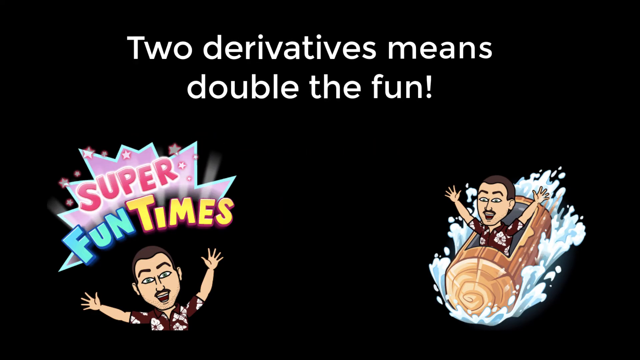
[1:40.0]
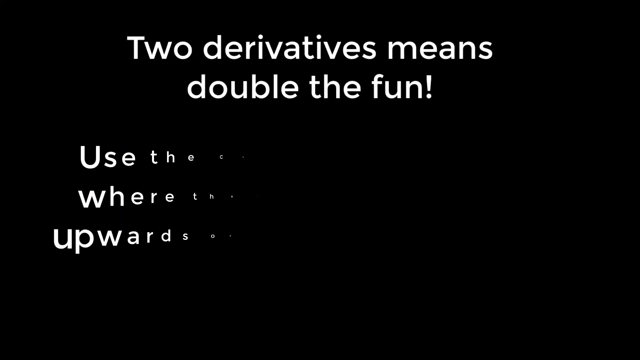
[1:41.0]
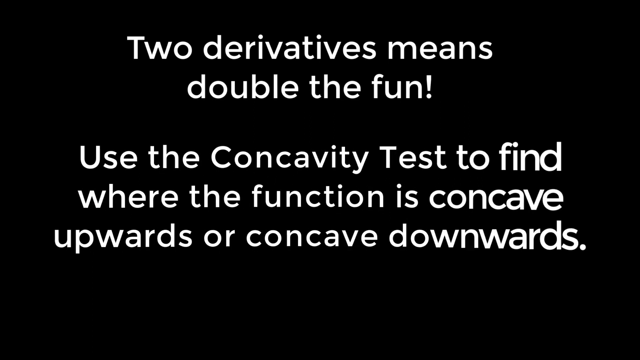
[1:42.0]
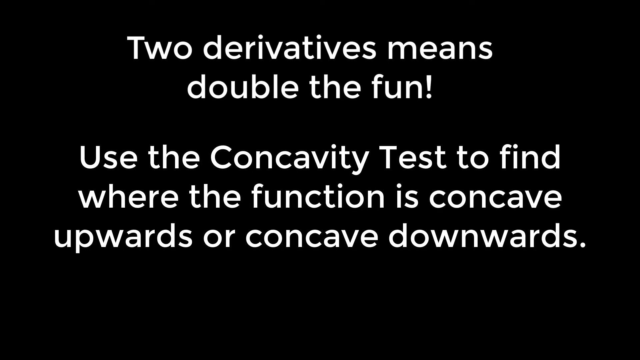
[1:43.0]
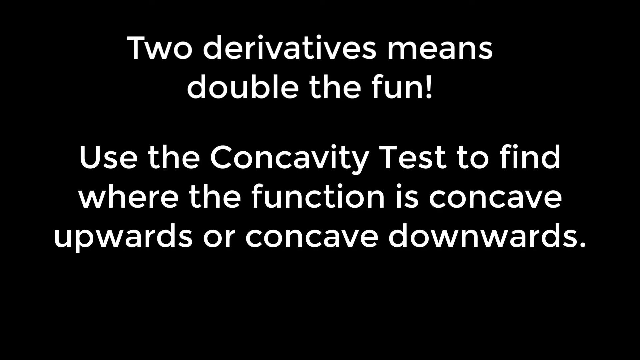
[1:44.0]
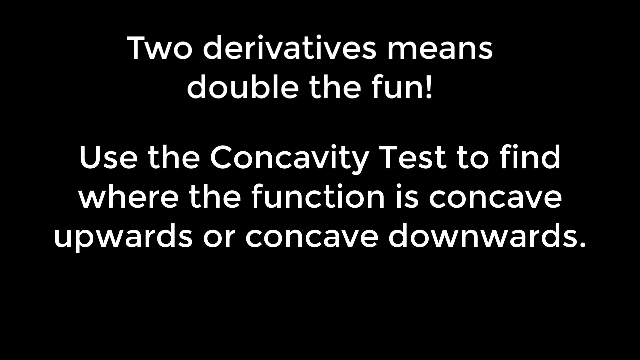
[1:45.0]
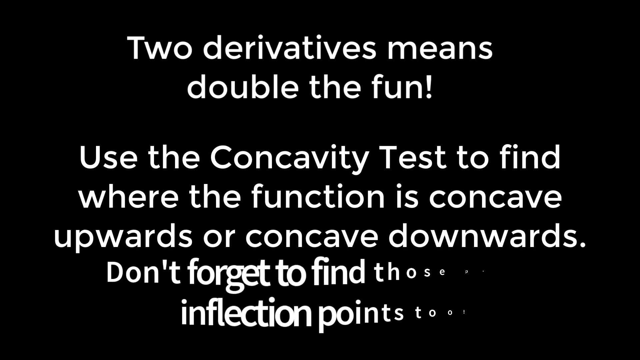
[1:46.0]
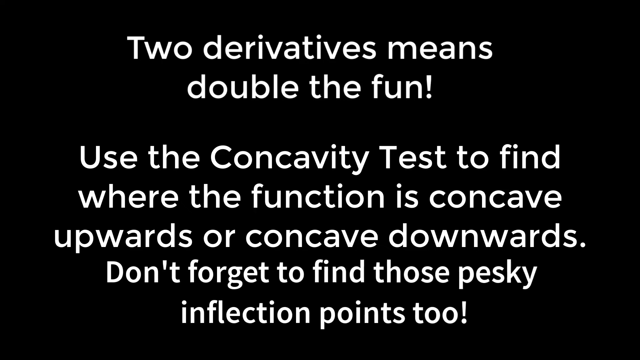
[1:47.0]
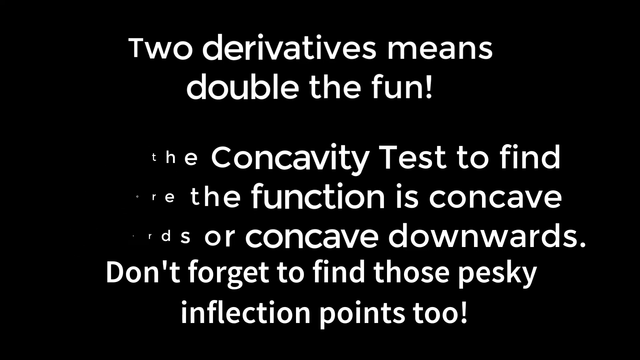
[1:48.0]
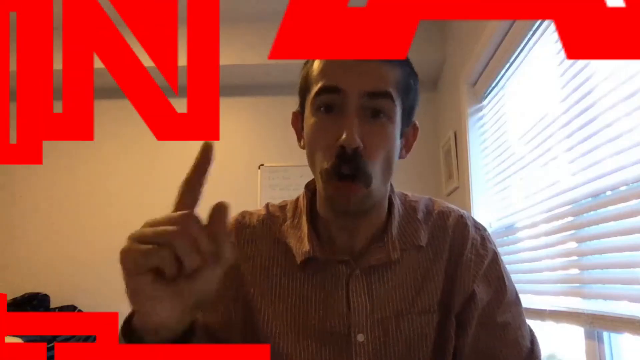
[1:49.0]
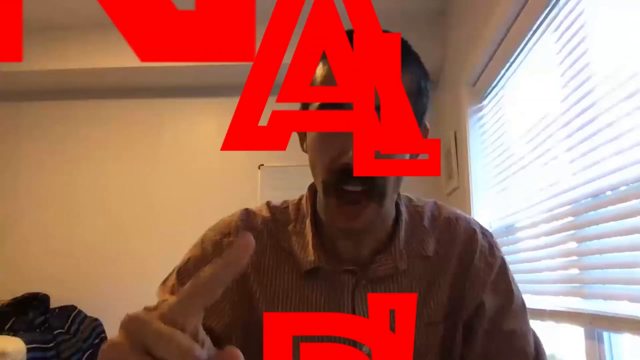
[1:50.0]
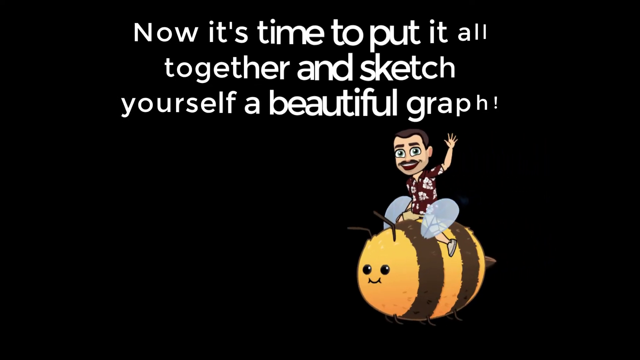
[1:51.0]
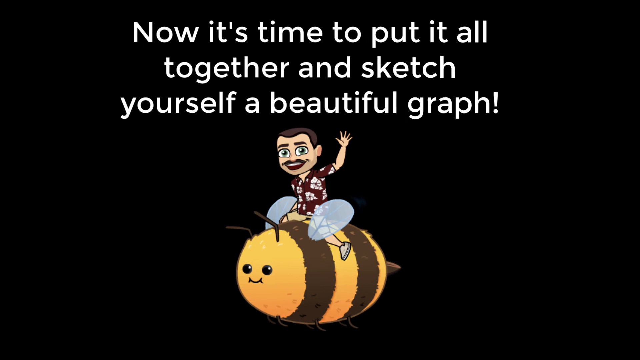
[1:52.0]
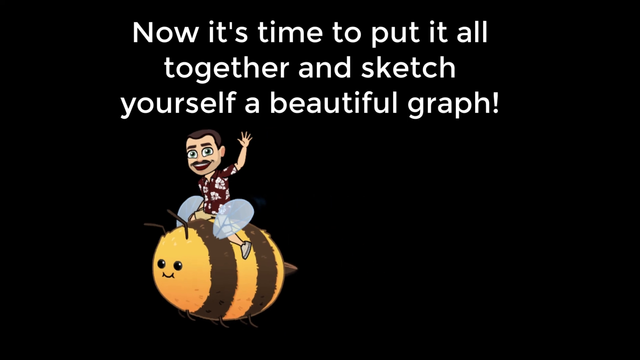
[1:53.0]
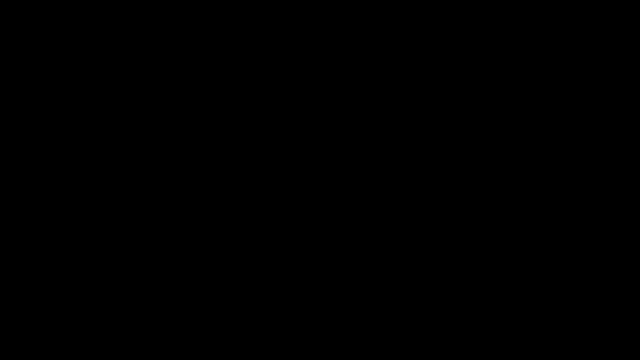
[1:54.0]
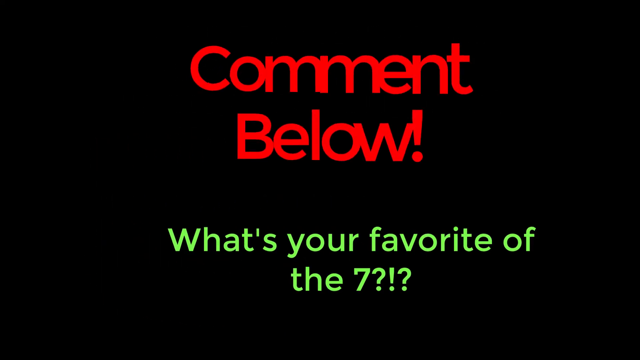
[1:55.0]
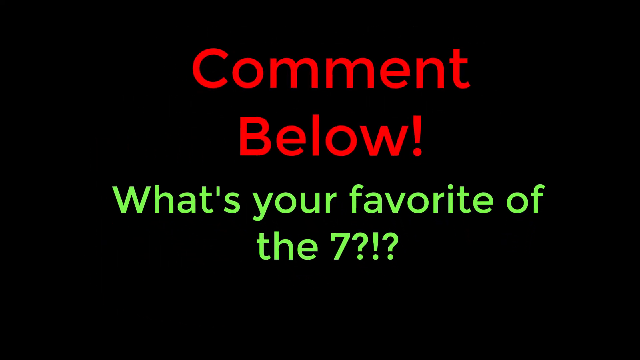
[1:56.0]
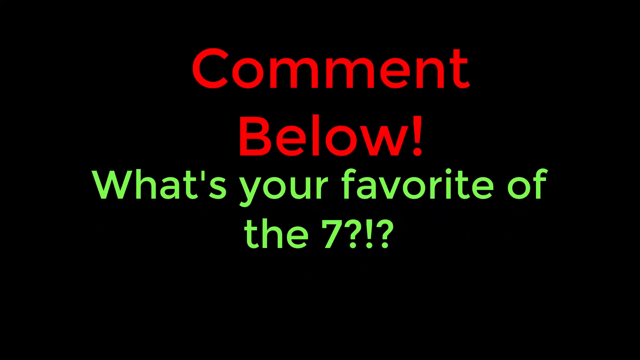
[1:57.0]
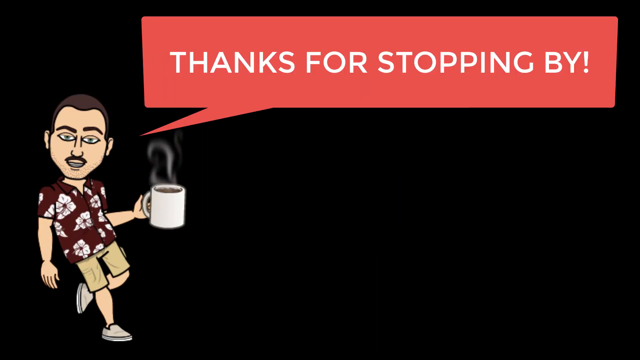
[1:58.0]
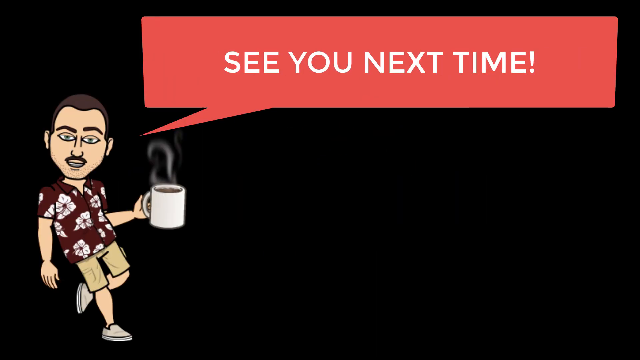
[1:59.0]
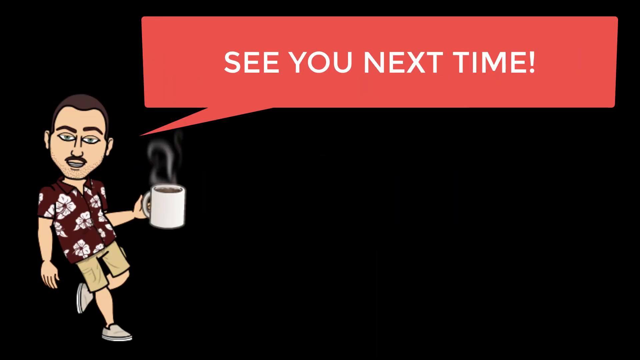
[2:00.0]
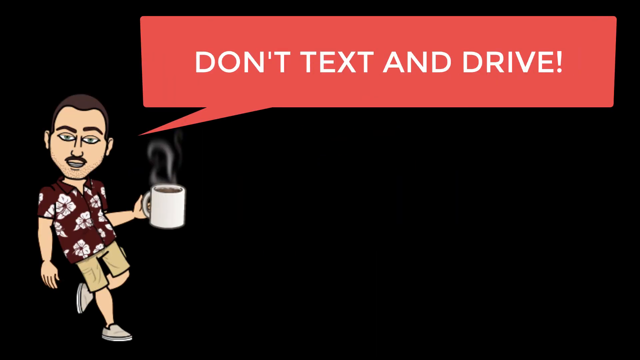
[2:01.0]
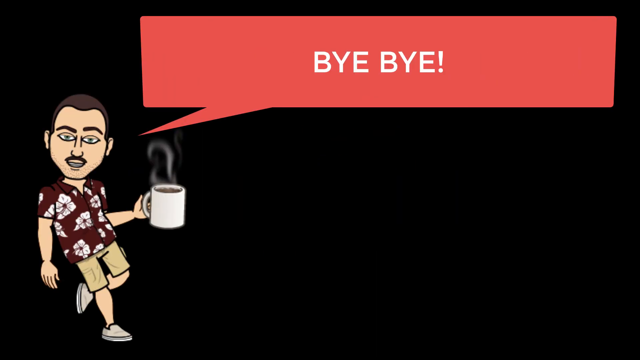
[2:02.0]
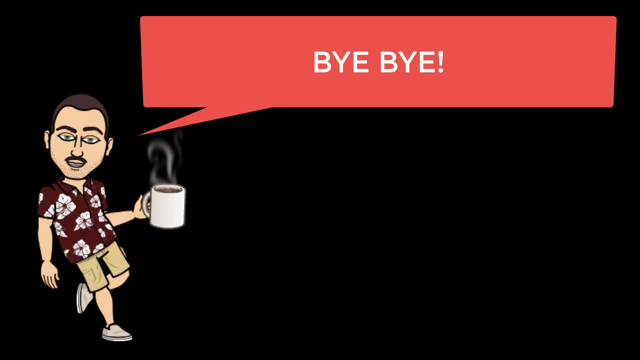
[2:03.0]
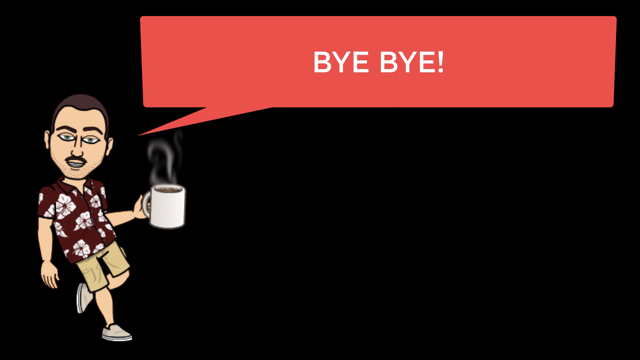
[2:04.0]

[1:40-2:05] A sentence at the top says "two derivative means double the fun." In the middle a new sentence appears: "use the concavity test to find where the function is concave upwards or concave downwards." At the bottom another appears: "don't forget to find those pesky inflection points too." All the sentences then disappear. The scene changes to the brown-mustached man in a collared shirt sitting in his room; the words "final step" appear in red while he points his right index finger. On a black background a sentence appears: "Now it's time to put it all together and sketch yourself a beautiful graph." At the bottom, a mustached man rides a cartoon bee across the scene to the left. Another black background shows "comment below" at the top and "what's your favorite of the seven?" at the bottom. Then a cartoon man in a white shirt and khaki shorts looks toward the camera, holding a cup of coffee in his left hand. A speech bubble at the top right says "thanks for stopping by," then "see you next time," then "don't text and drive," and then "bye-bye."